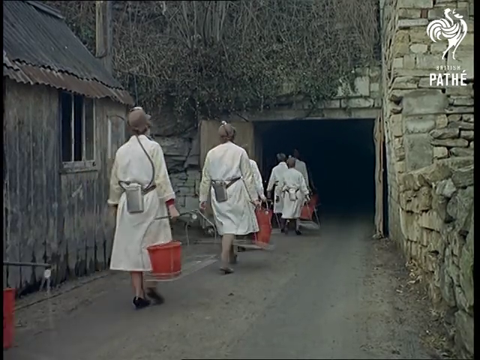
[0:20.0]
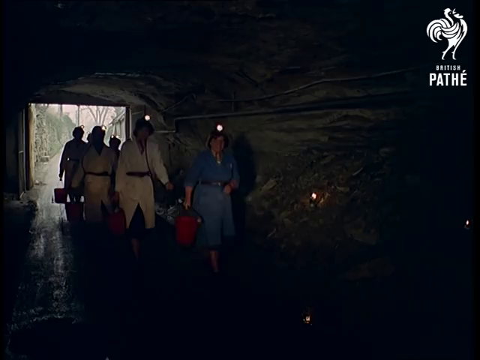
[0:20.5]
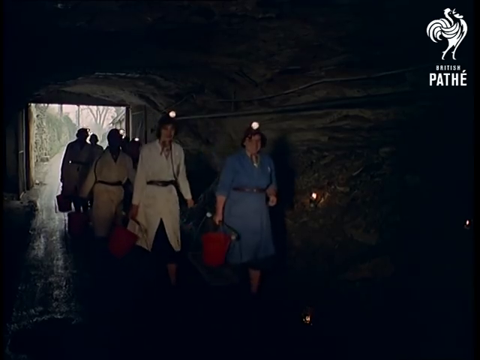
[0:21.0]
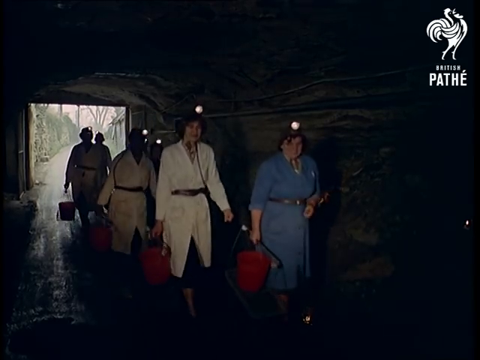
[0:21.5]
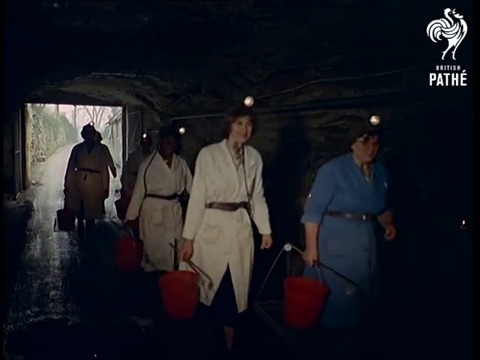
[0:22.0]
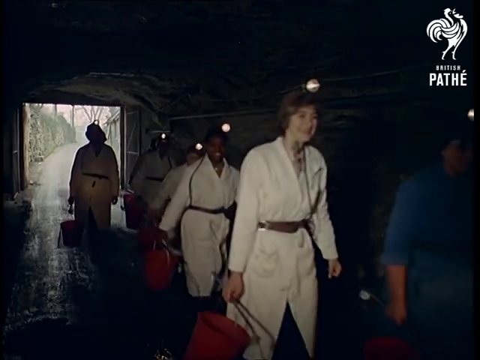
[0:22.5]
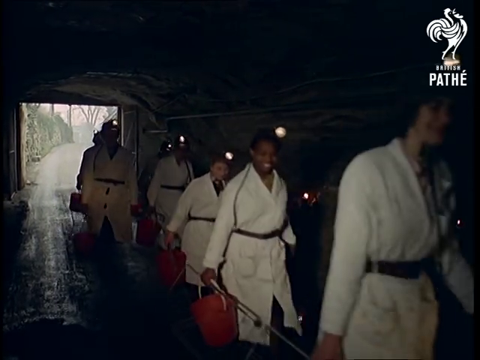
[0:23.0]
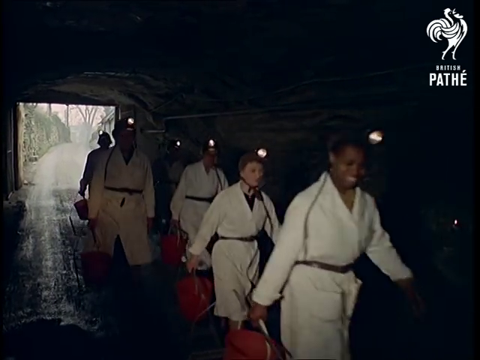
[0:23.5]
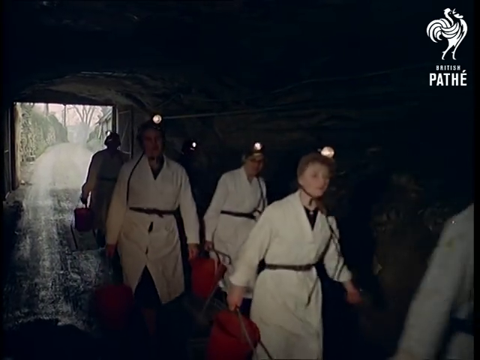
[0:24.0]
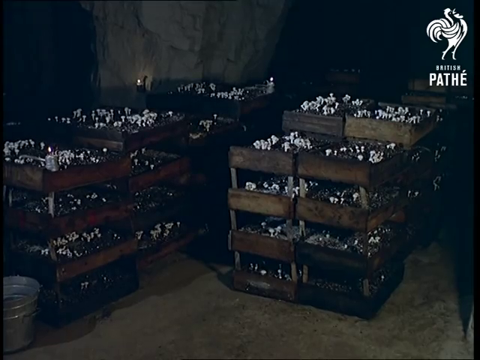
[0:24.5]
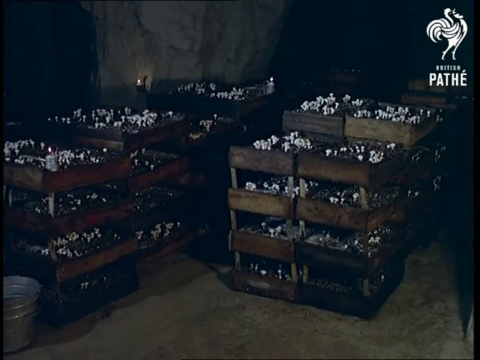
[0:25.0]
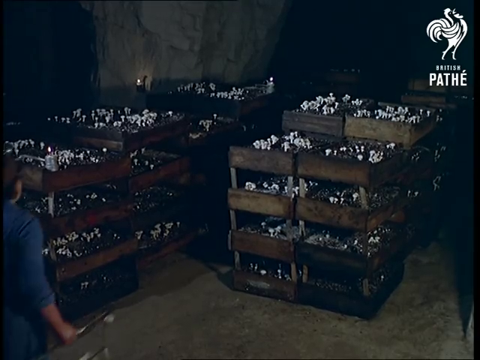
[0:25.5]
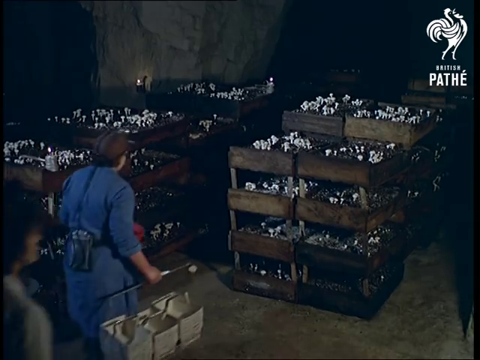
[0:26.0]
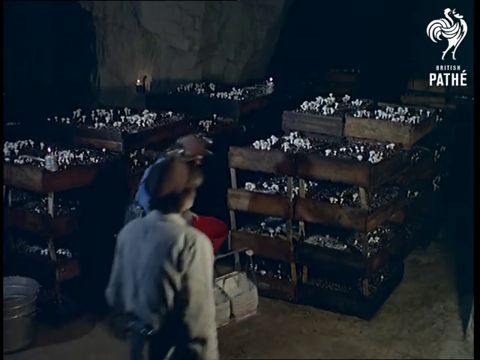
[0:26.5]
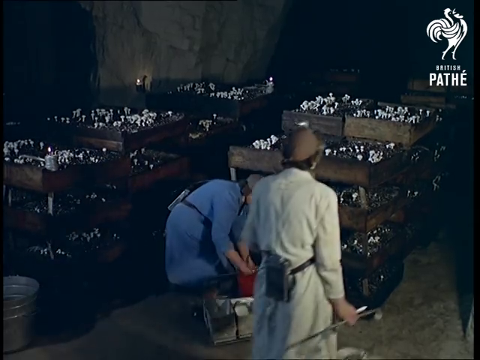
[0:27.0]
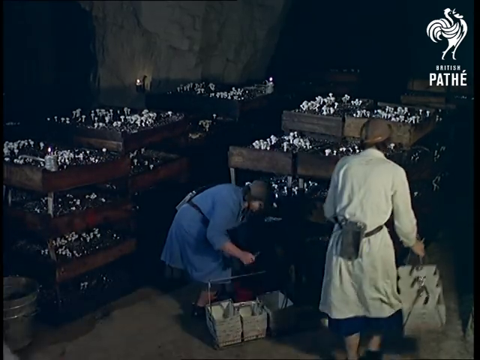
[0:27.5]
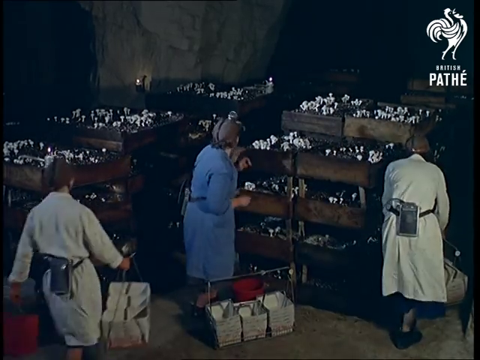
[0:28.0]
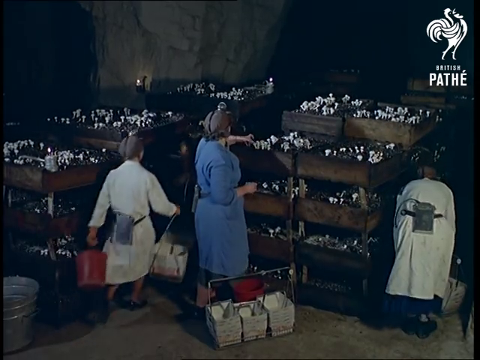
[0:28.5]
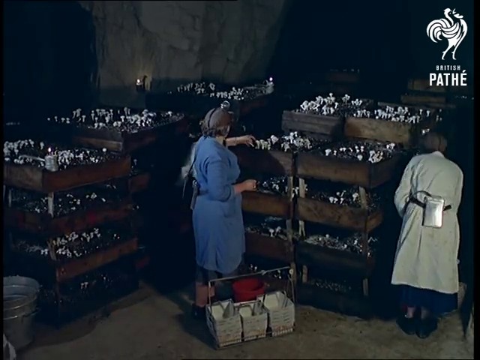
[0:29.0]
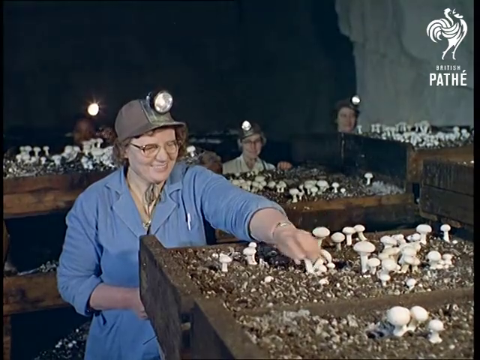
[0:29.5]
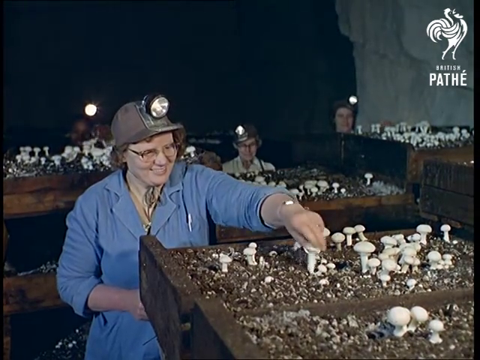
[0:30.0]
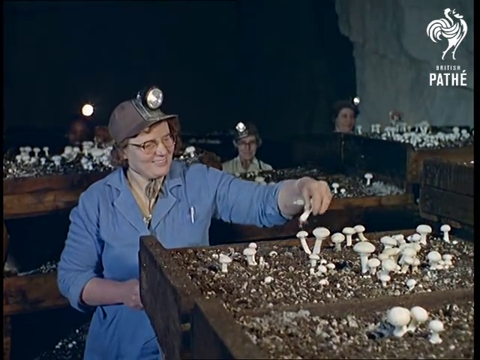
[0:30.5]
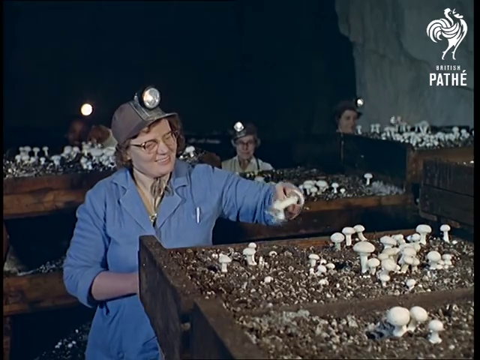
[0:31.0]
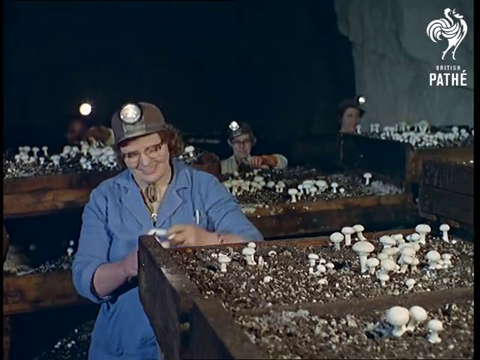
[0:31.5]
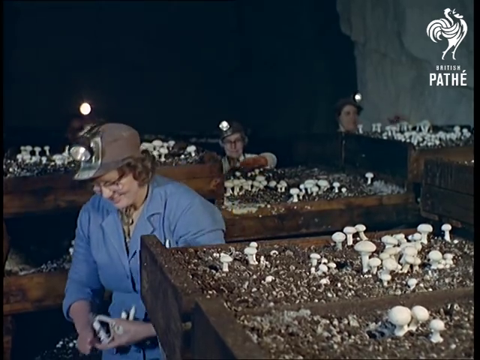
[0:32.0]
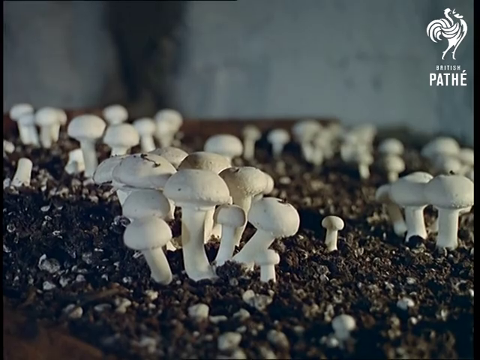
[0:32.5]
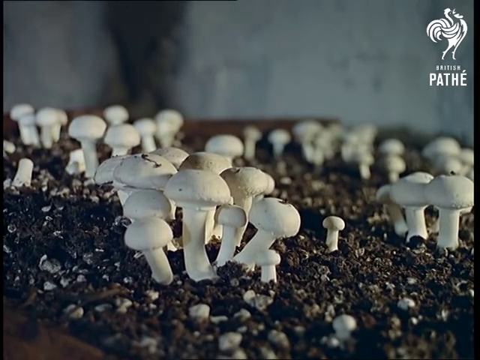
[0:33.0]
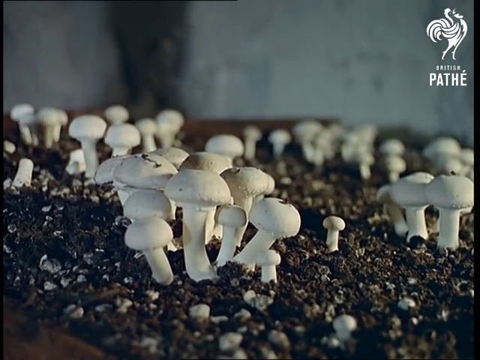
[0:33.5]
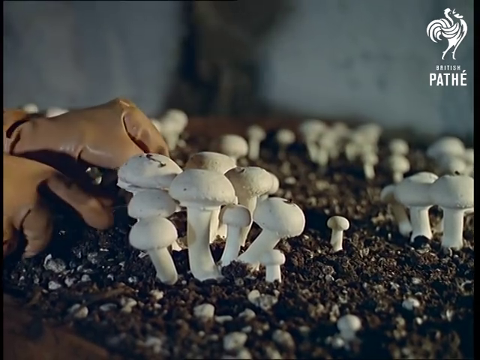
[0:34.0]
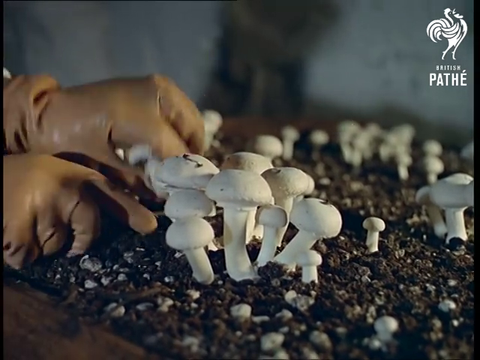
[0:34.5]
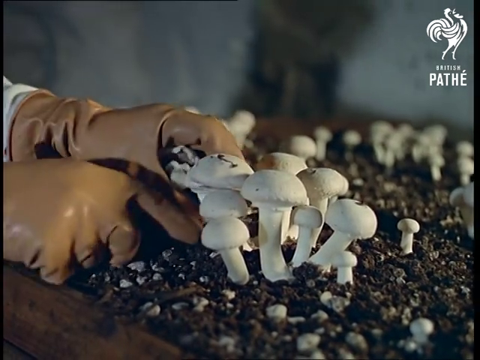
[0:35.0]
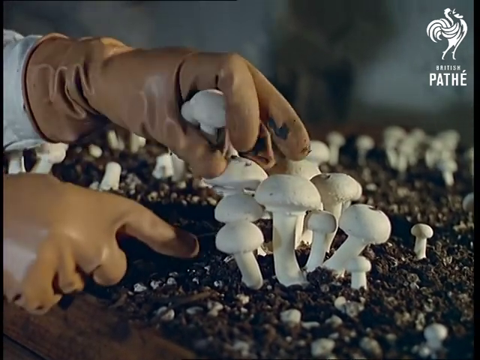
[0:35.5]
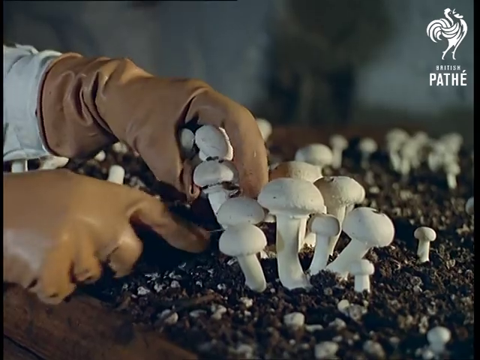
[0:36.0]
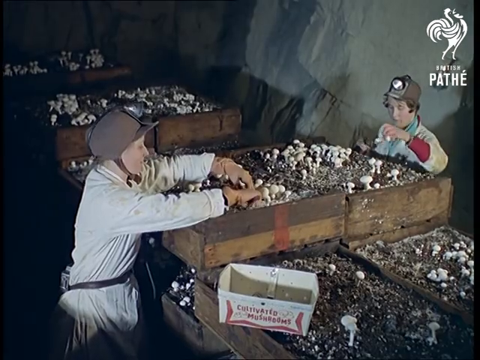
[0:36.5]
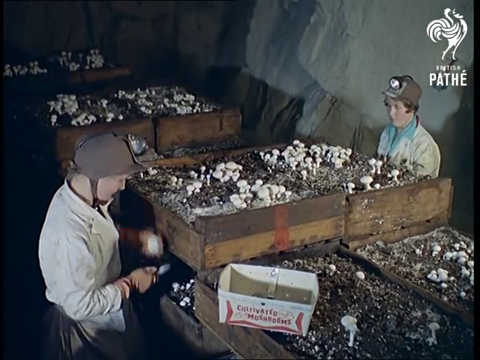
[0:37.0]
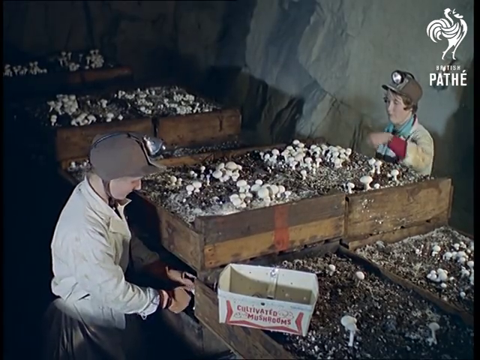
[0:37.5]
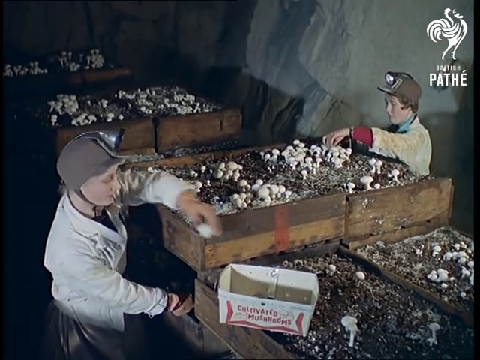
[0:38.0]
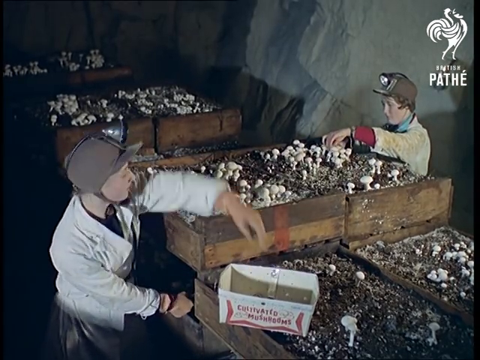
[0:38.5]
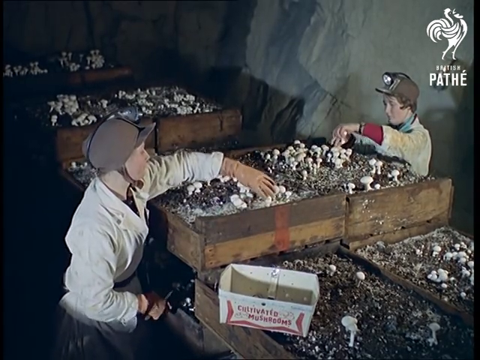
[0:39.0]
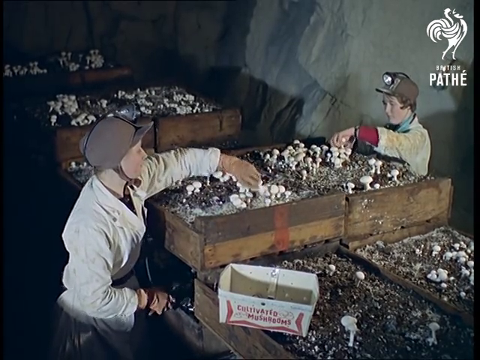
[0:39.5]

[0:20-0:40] The women enter the cave with the headlamps lit. It is dark inside, and they pick what look like mushrooms, which are in dirt pallets; there are many of them. Some women pick the whole mushroom up and tear off the bottom, while others use knives to cut off the bottom before putting it into their pails or boxes. The women smile and talk to each other as they work, selecting the mushrooms, apparently the best-looking ones.